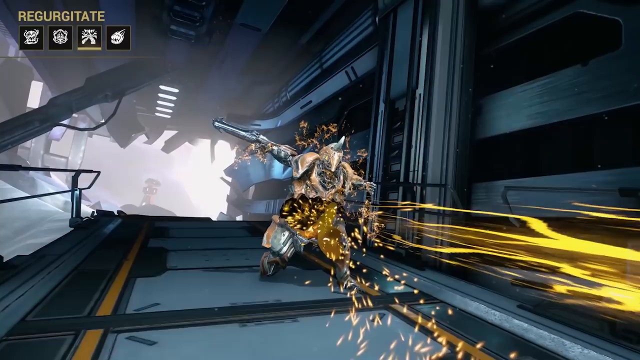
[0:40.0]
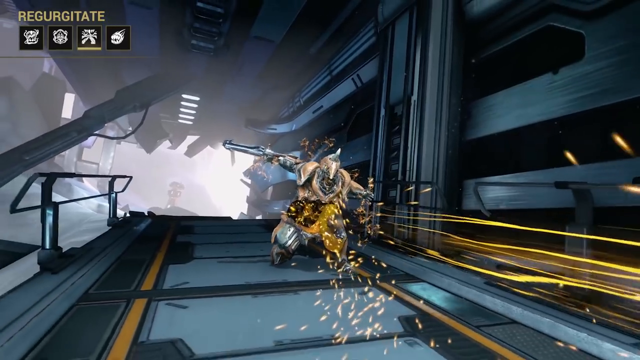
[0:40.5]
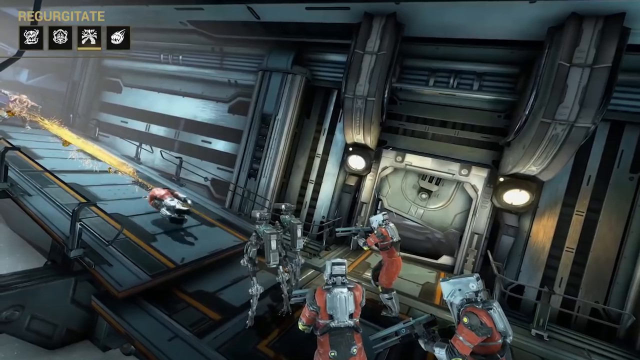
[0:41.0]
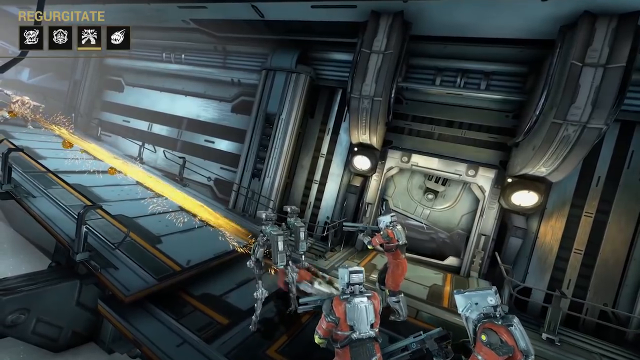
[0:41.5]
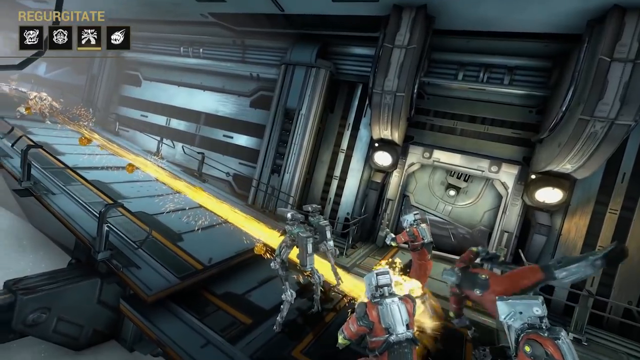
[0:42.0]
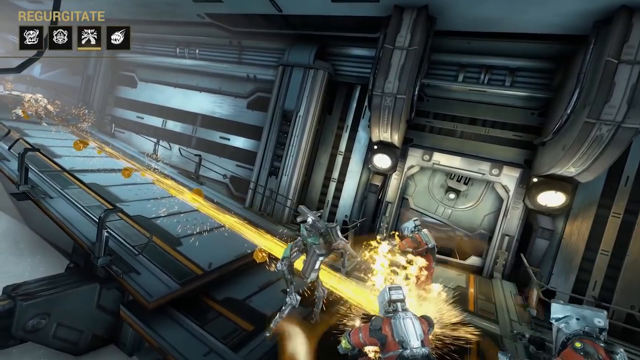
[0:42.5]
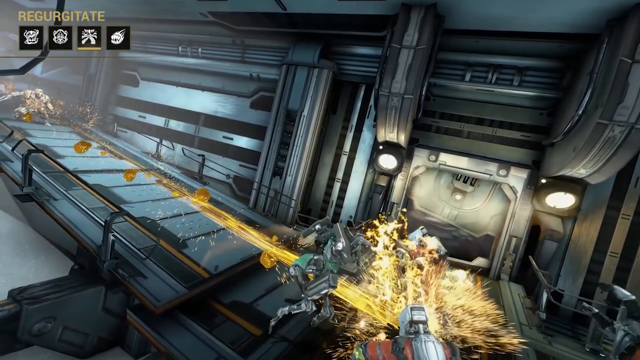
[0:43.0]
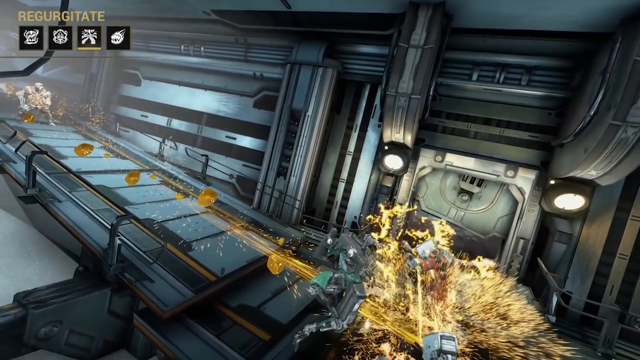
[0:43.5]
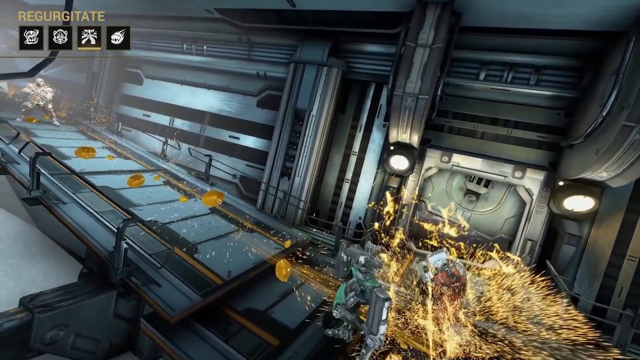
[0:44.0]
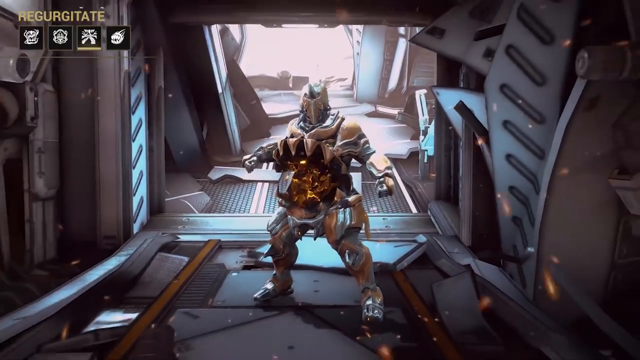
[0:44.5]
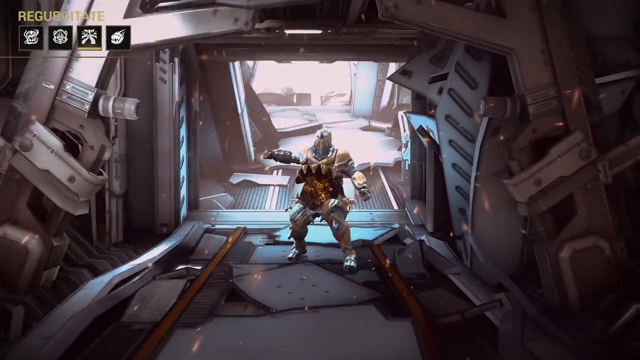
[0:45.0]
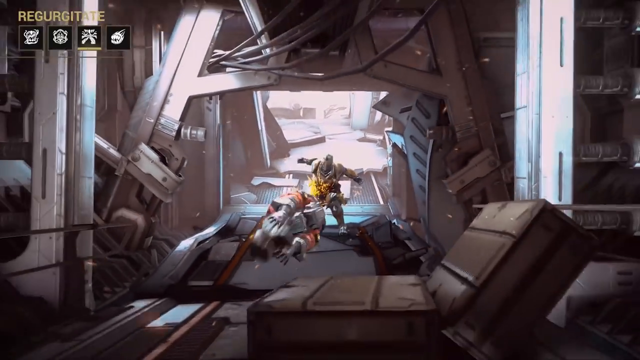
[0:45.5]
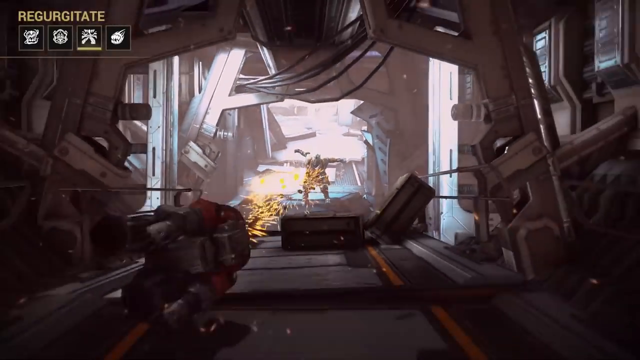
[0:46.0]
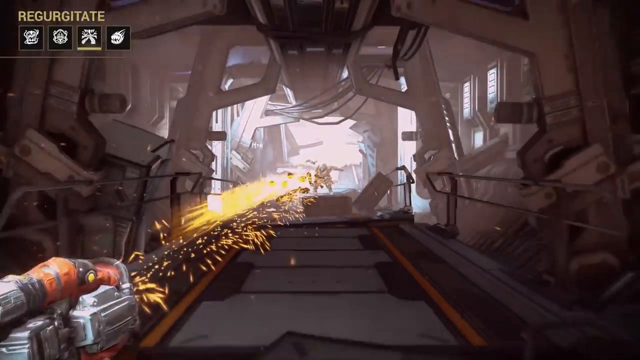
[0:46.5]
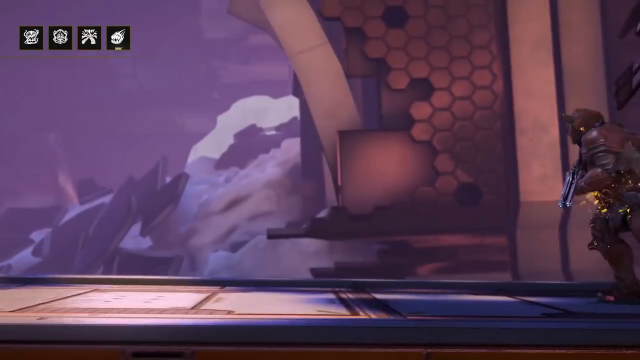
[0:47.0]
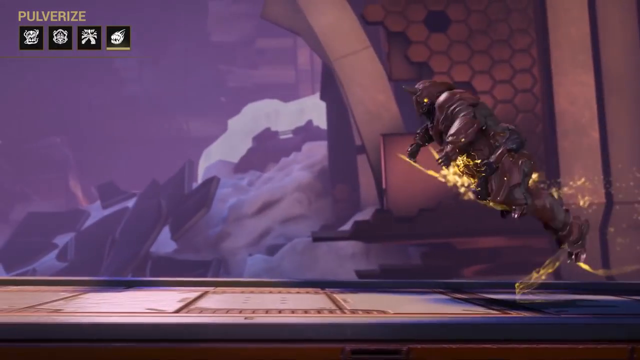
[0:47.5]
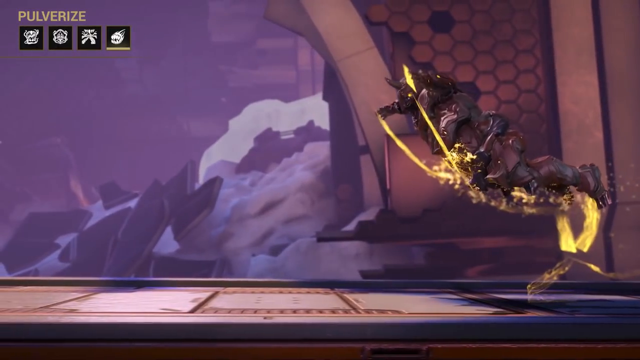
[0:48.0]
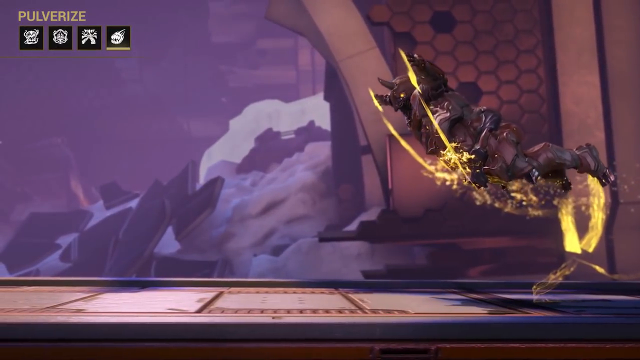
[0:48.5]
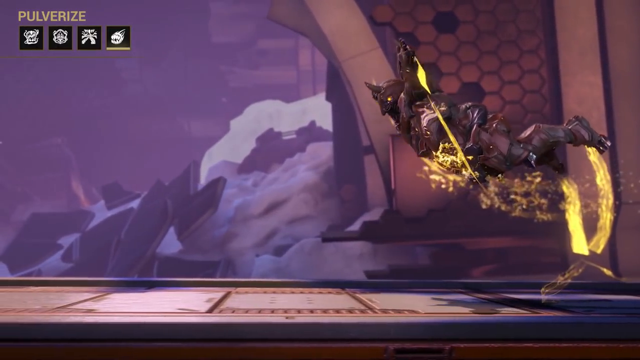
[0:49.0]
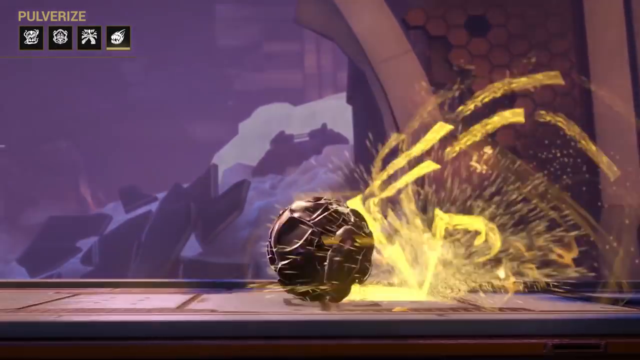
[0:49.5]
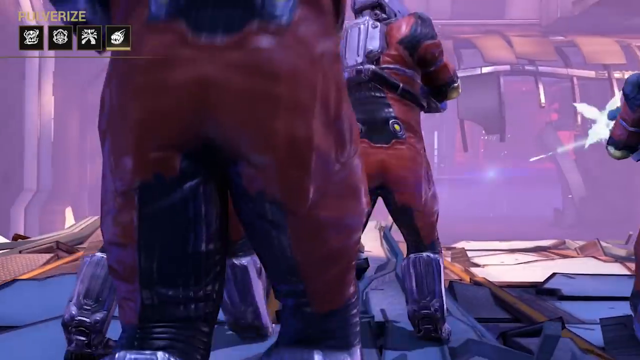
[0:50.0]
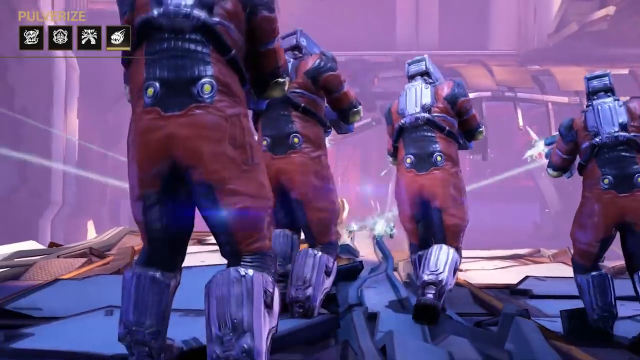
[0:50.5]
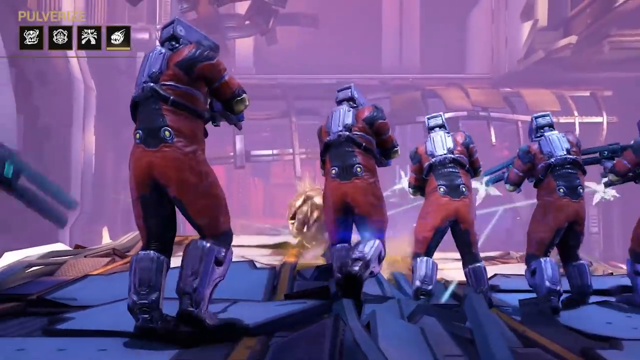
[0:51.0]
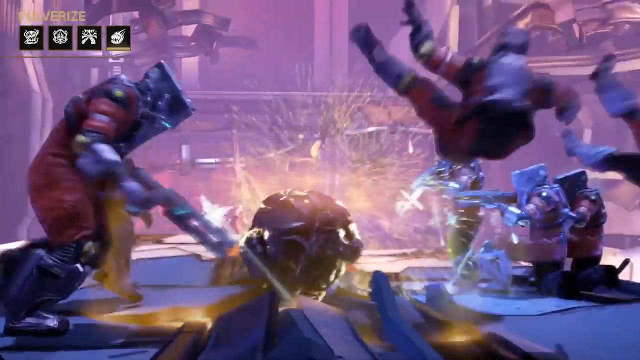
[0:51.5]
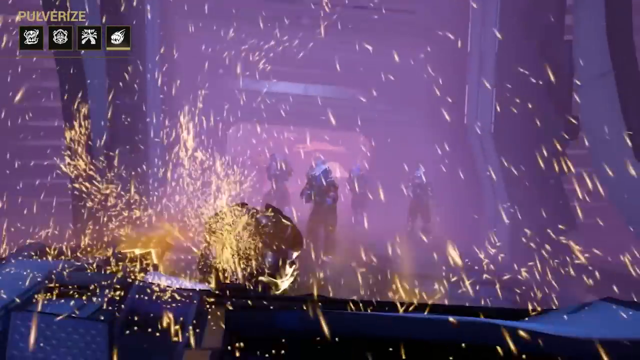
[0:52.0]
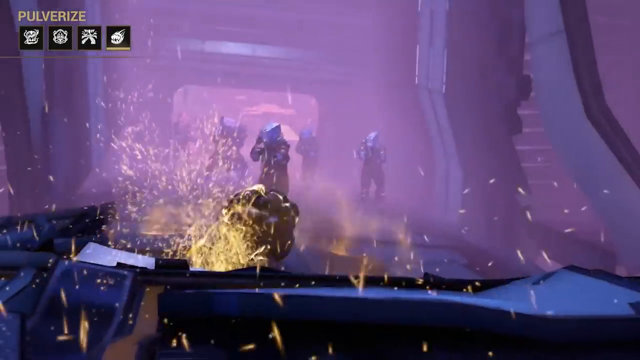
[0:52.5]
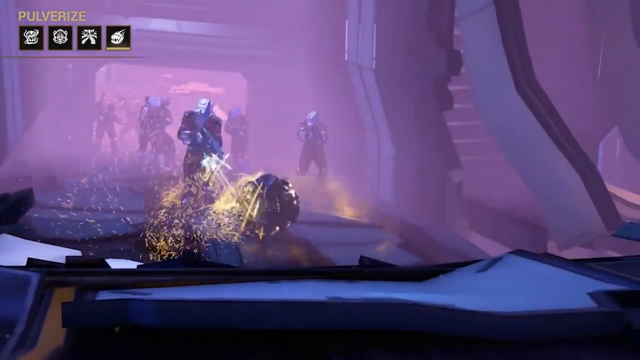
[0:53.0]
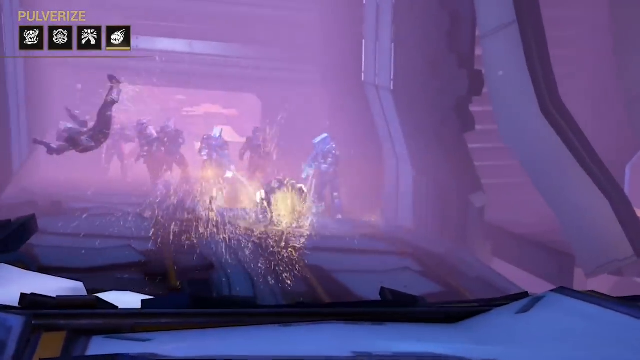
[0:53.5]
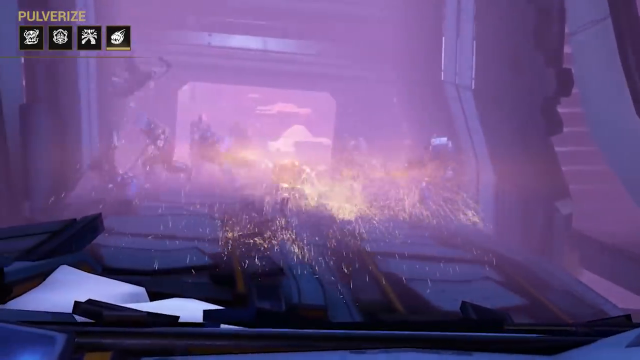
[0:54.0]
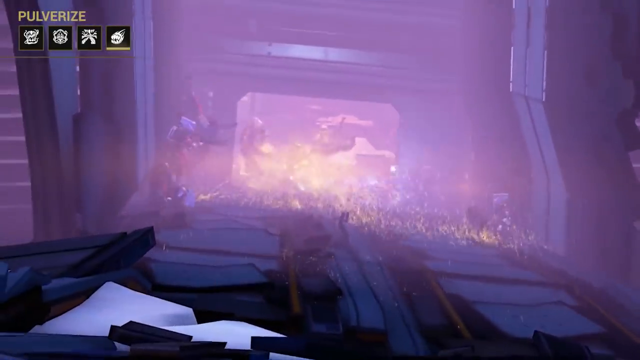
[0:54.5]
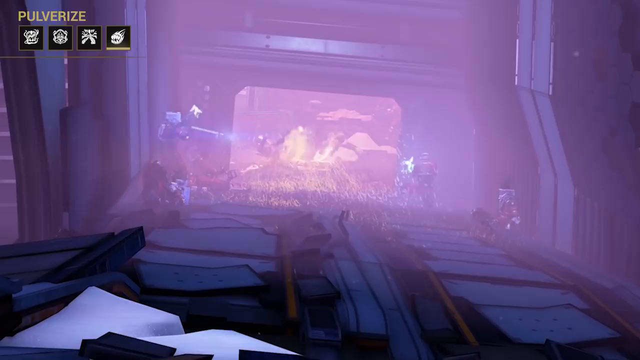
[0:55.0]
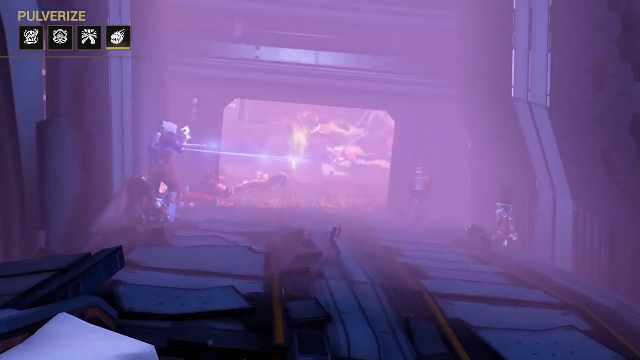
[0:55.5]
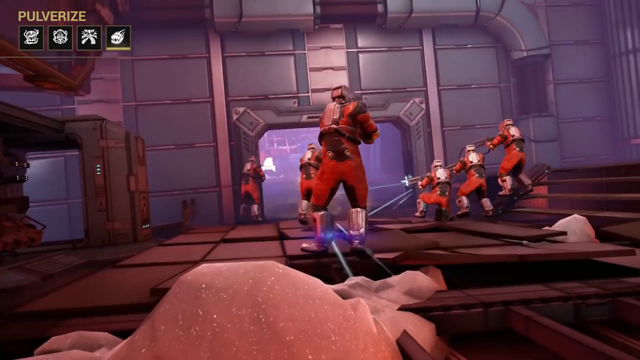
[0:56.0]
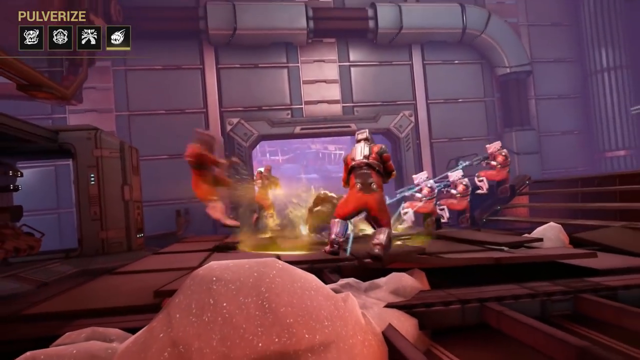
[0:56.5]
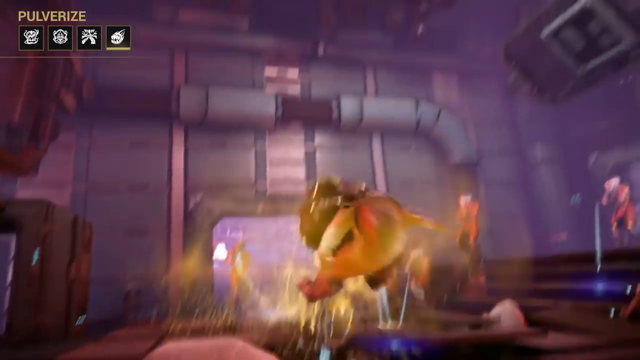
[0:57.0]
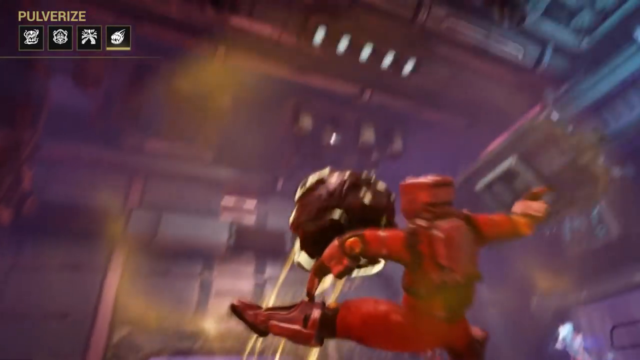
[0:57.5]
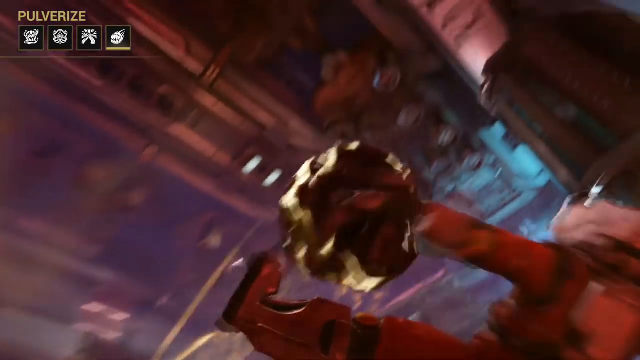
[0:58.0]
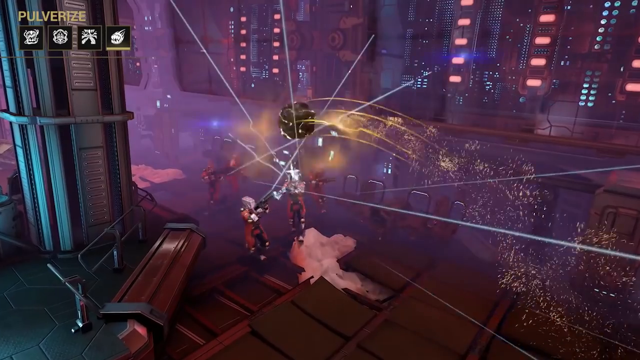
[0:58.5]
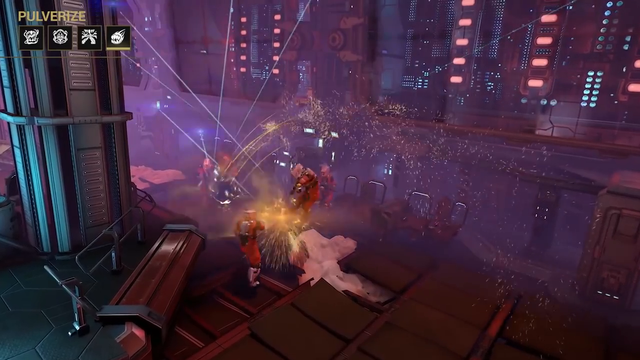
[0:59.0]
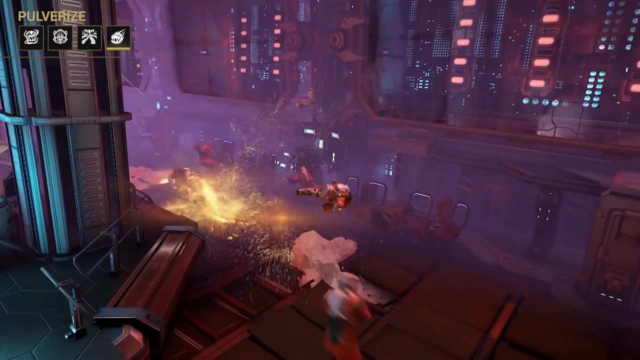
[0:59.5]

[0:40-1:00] In the video game, the corner reads "regurgitate," with four symbols, the third from the left underlined. A character, apparently Grendel, is on a path holding a weapon in his right hand, with yellow lines coming out of his left hand as if he is shooting, almost like lava. He targets people, machines or androids maybe about a hundred feet away and blows them up. He shoots something out of his hand, seemingly a capsule, with a lot of sparks flying, and it apparently hits a guy in rust-colored armor who seems to be lit on fire. Beyond him a snowy mountain is visible. The guy falls to the ground and turns into a ball on fire that rolls toward other soldiers, knocking them down like bowling pins, and goes past them.